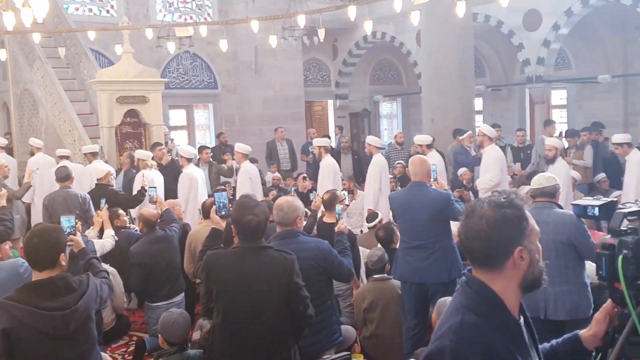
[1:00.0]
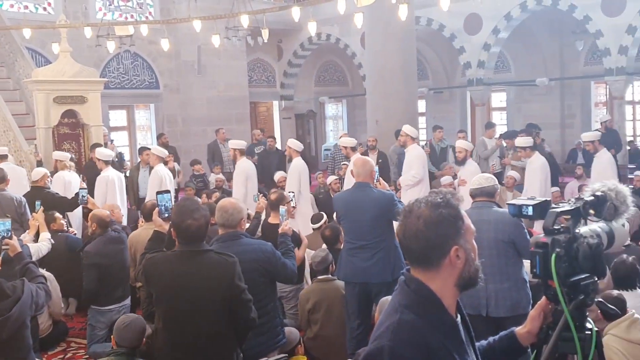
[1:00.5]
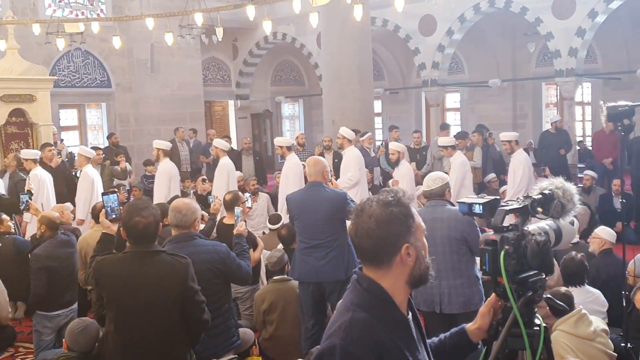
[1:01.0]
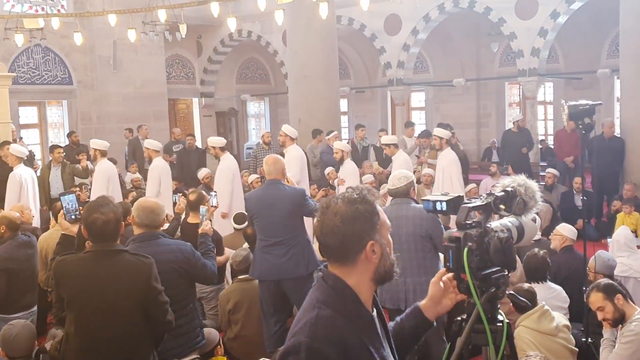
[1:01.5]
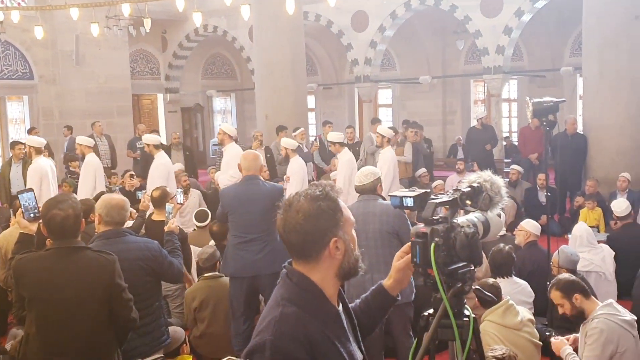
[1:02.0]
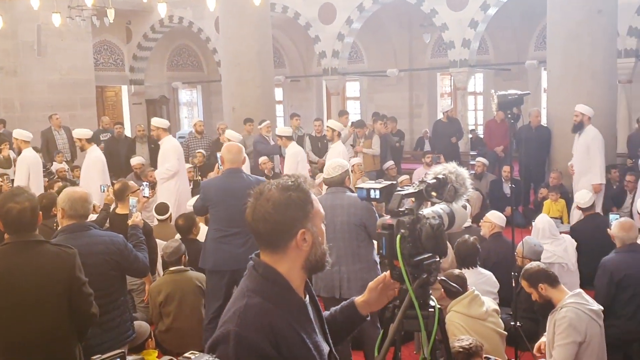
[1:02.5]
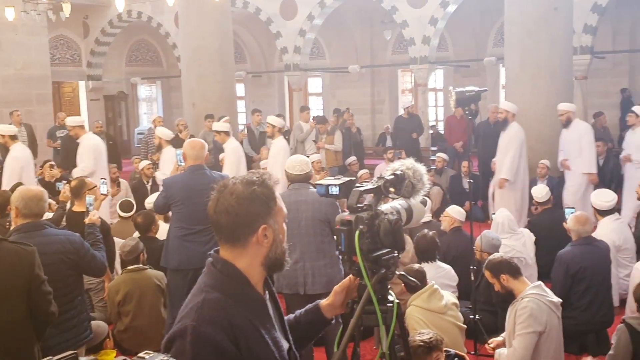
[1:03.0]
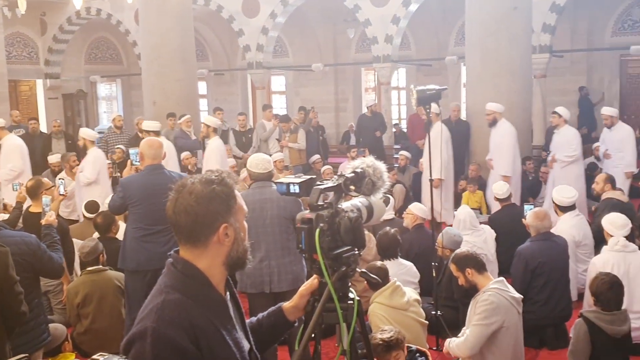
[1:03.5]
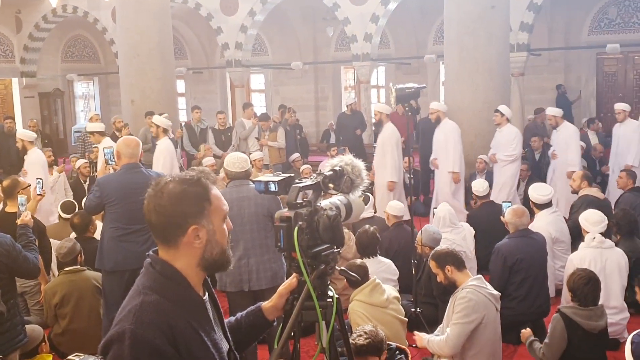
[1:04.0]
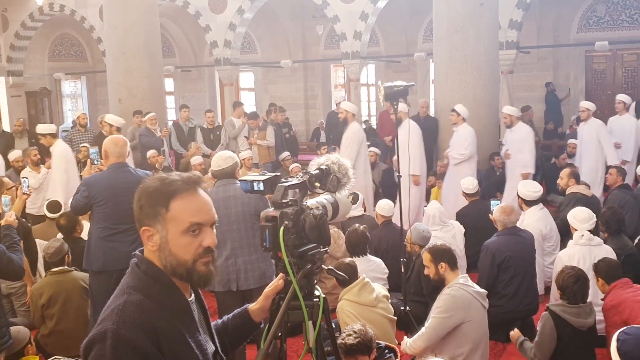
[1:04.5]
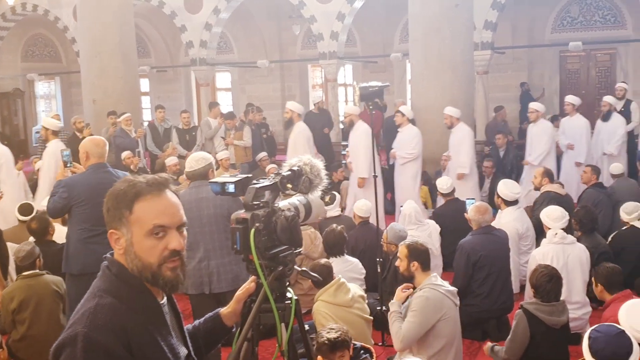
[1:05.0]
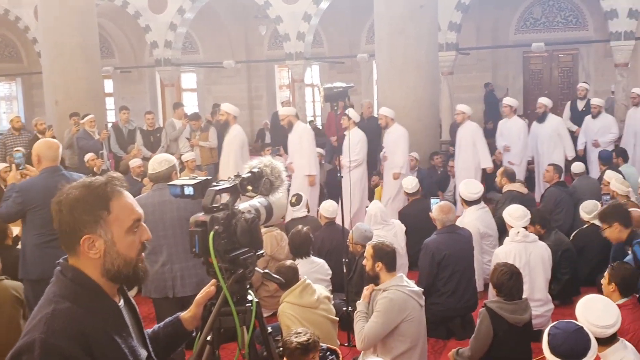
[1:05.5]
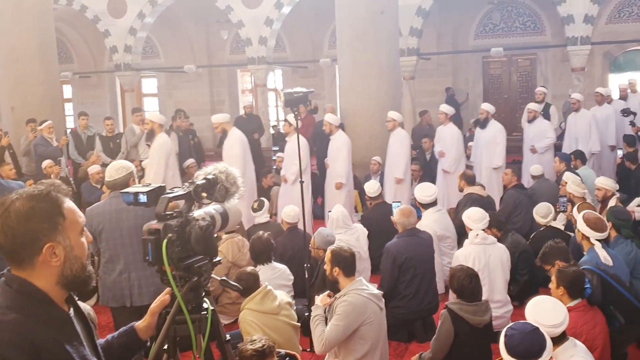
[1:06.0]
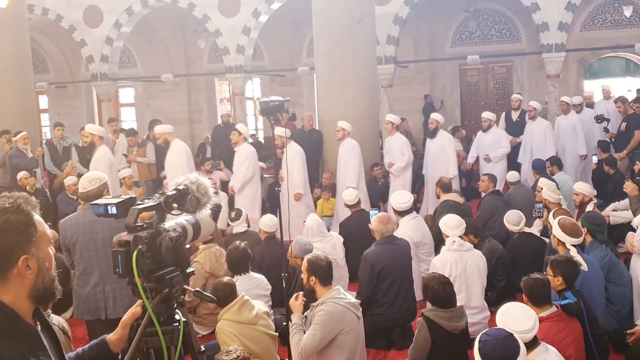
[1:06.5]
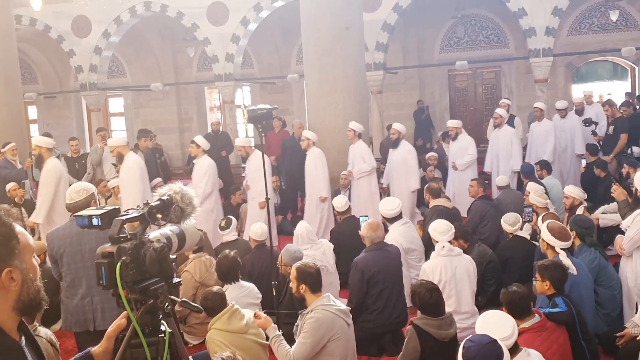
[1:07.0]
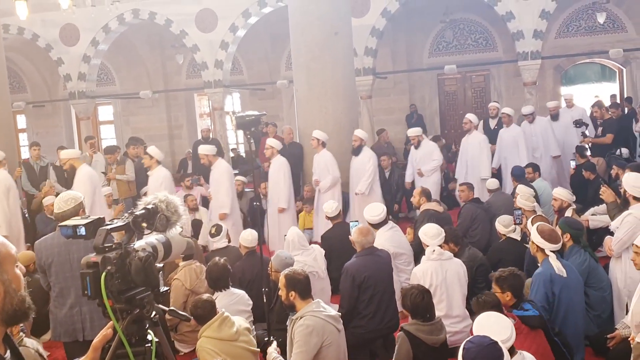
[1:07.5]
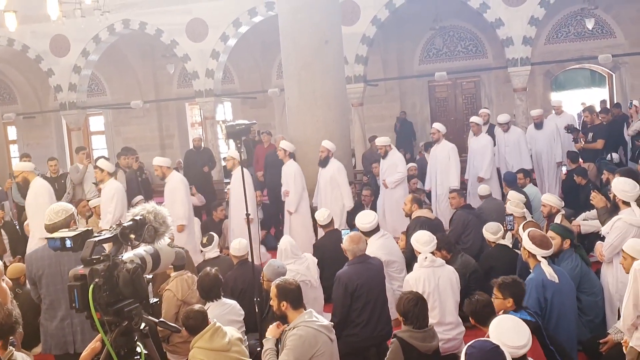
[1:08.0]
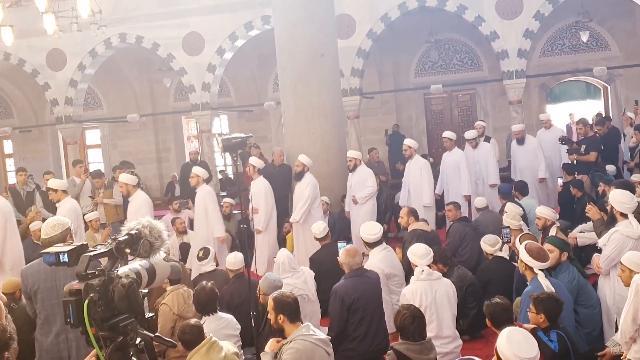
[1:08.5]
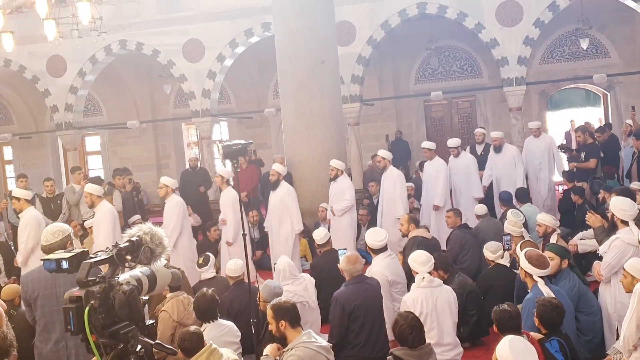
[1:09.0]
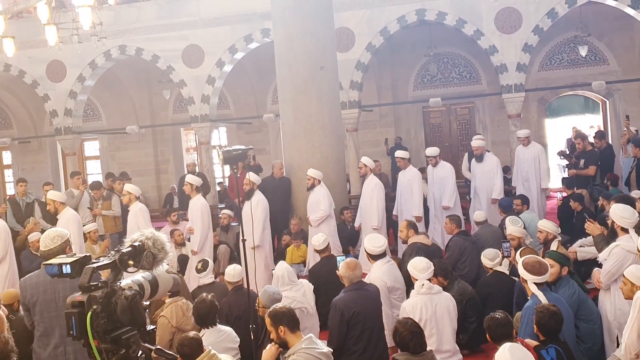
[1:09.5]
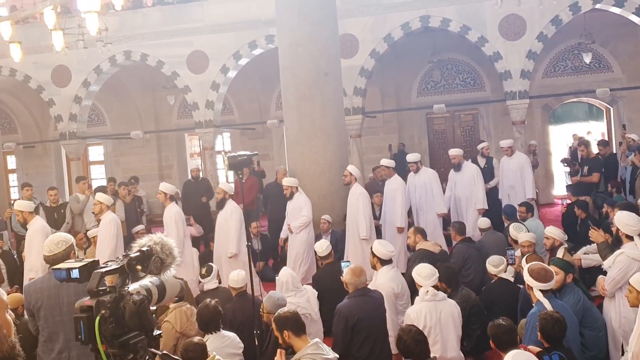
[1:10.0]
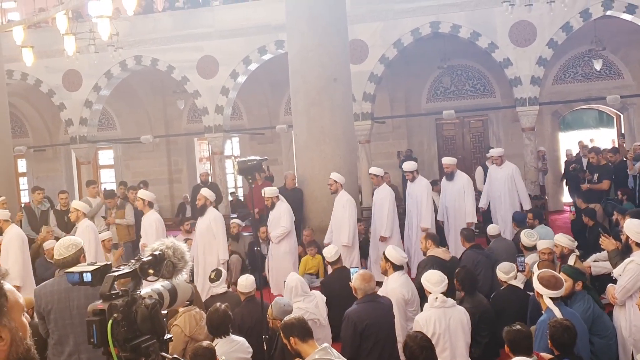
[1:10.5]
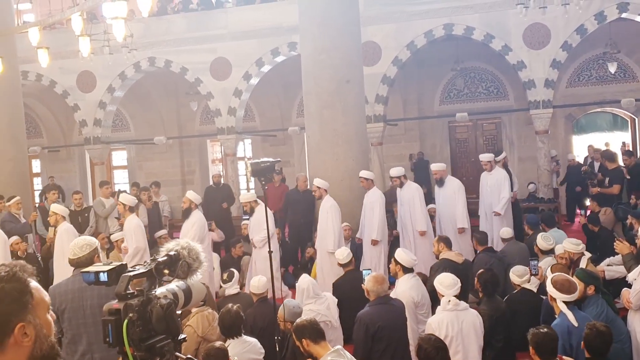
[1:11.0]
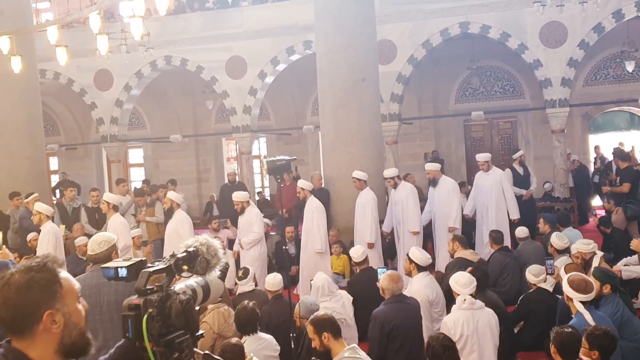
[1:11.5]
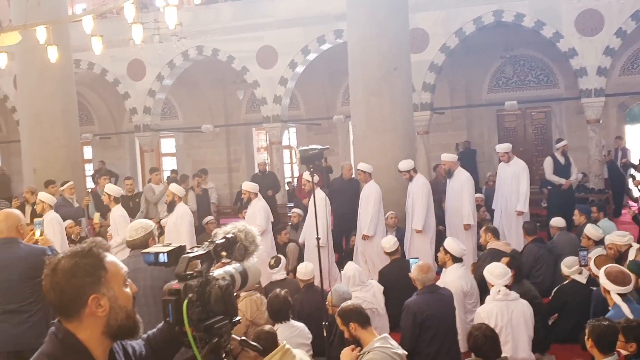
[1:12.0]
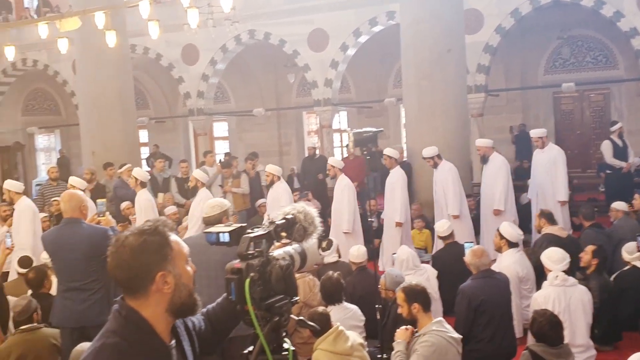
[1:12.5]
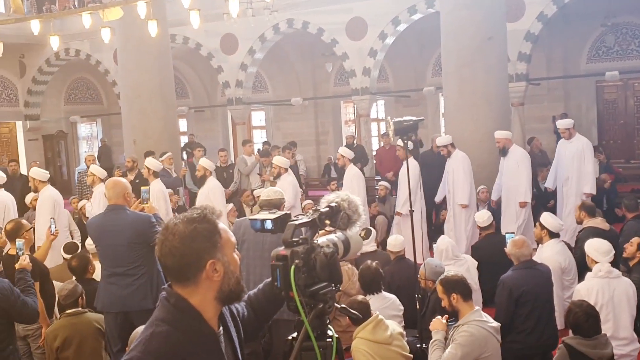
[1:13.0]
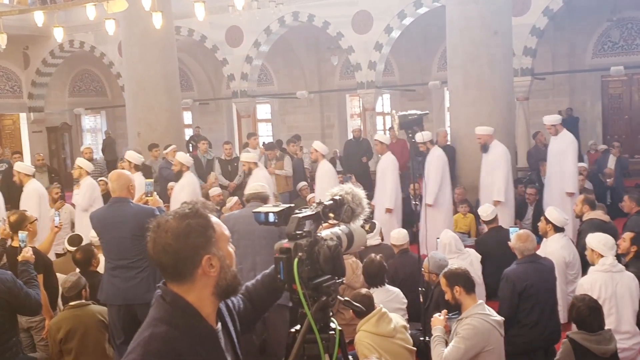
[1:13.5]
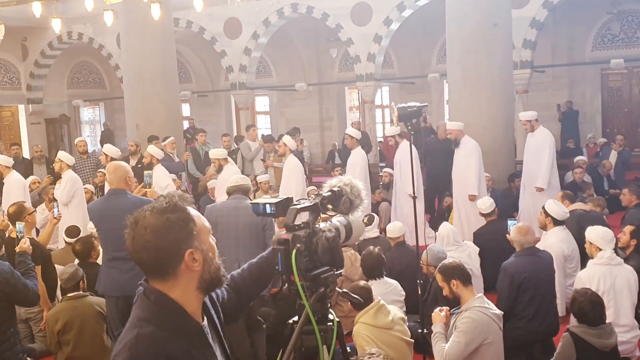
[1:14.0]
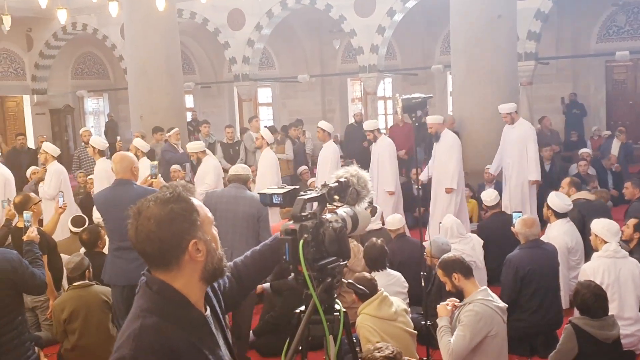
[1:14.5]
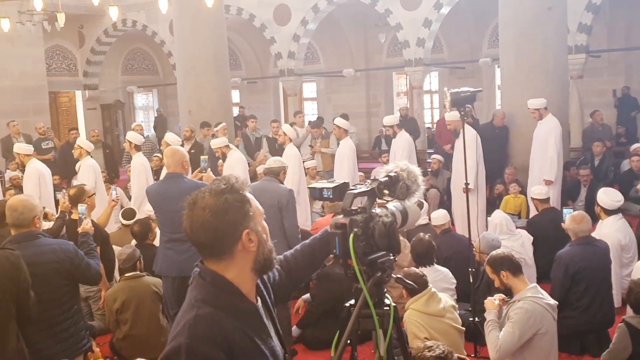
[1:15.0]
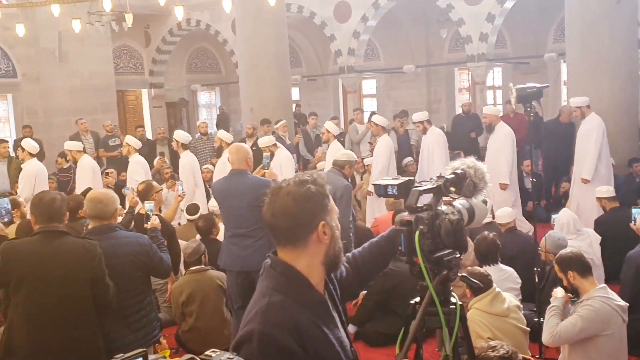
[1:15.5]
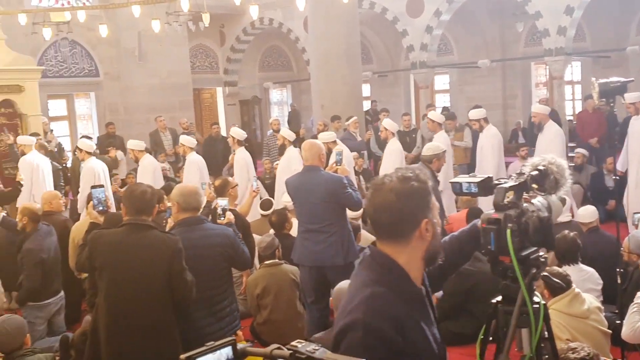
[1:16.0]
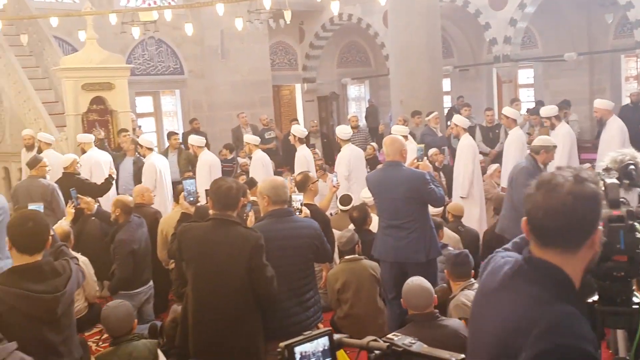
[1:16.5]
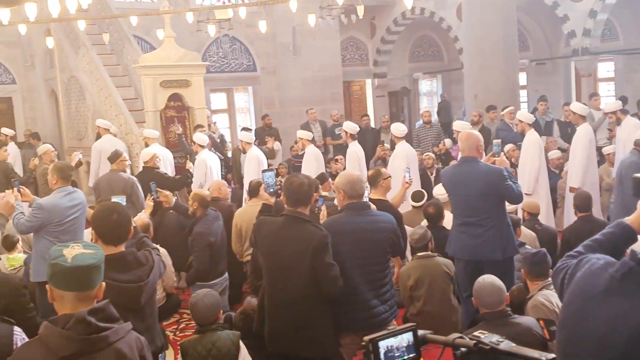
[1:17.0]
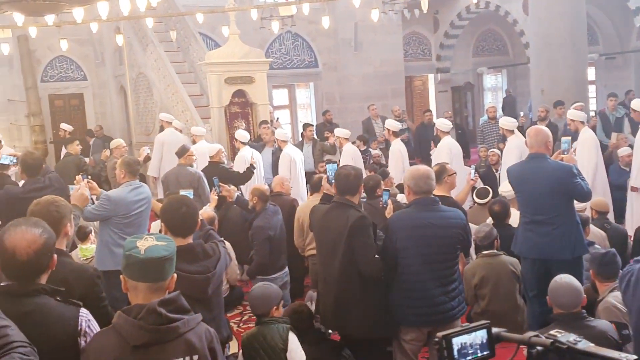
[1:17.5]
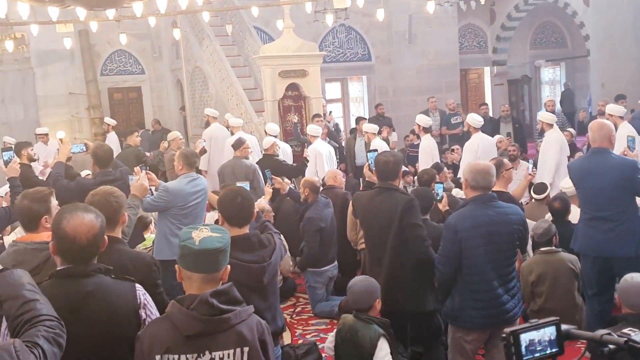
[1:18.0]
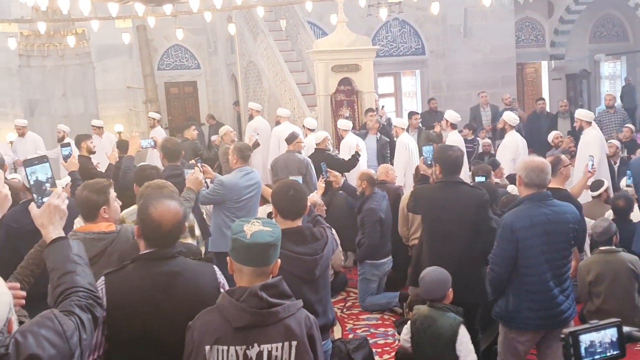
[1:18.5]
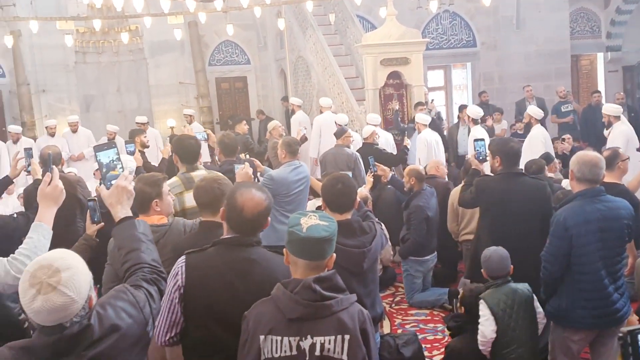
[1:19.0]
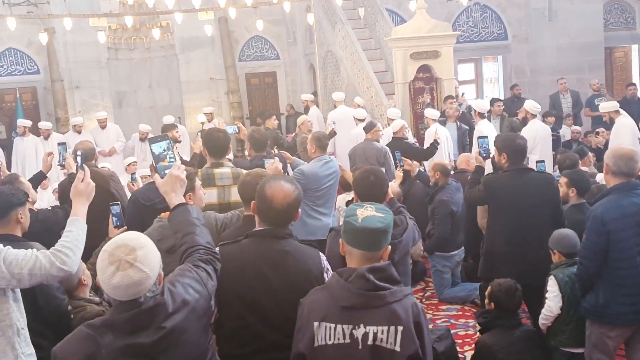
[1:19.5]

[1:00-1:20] A procession of men walks into a church-like or religious setting while a crowd of people videos and watches. Quite a few men come in, probably maybe 40 or 50. The beginning of the line was younger boys and men, and toward the back are older men with beards and mustaches, though they still look young, maybe in their 20s or 30s. The area has a balcony above, and lights hang in the middle area, lighting up the whole church area, with a large chandelier at the top. A professional photographer in the middle of the screen, who has something like a microphone, videos the whole procession as people come in.